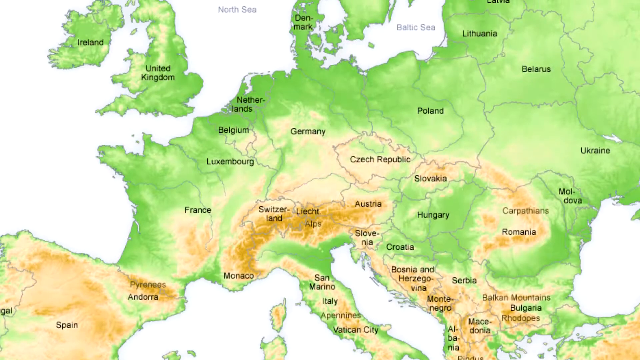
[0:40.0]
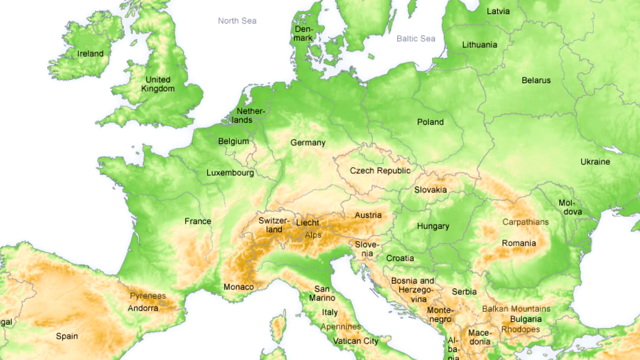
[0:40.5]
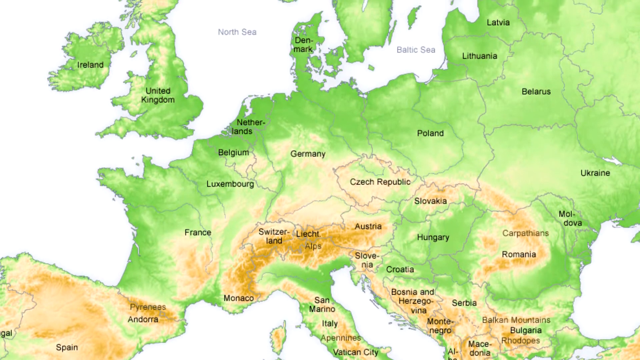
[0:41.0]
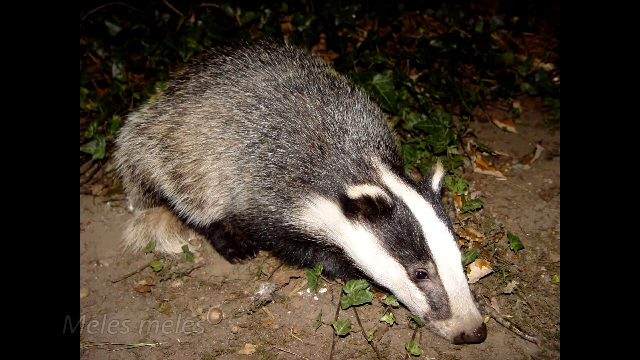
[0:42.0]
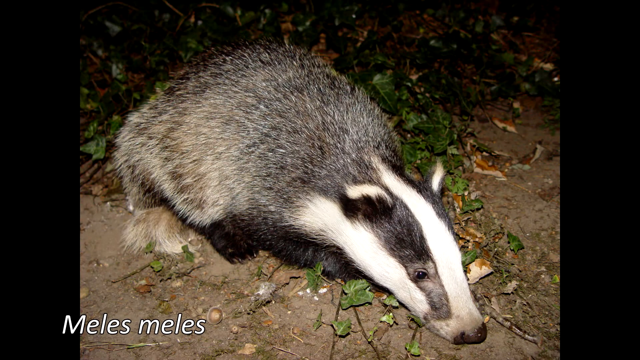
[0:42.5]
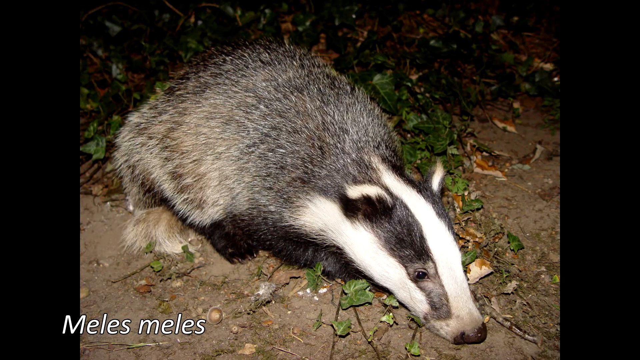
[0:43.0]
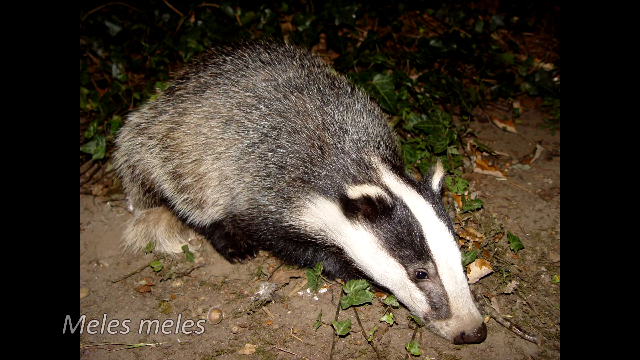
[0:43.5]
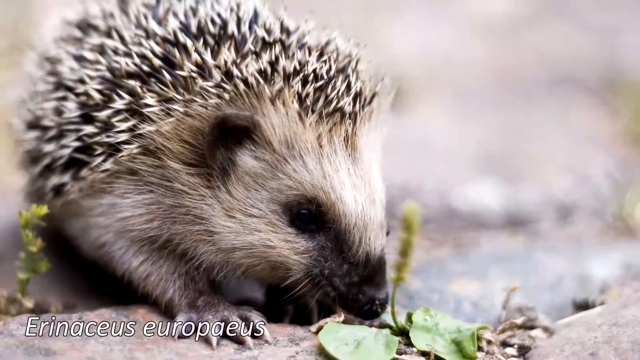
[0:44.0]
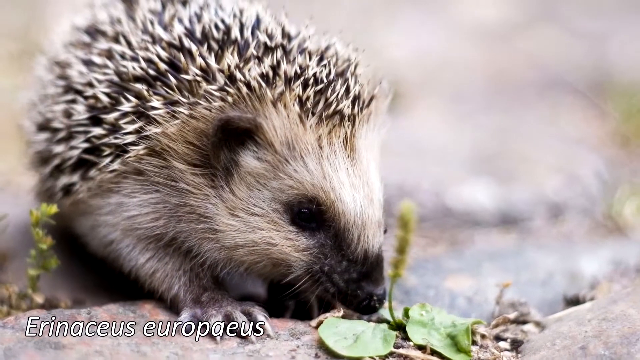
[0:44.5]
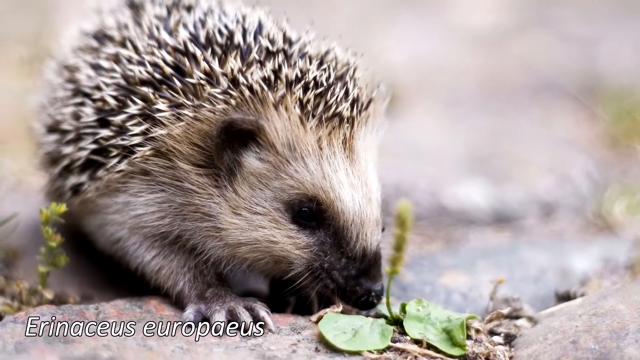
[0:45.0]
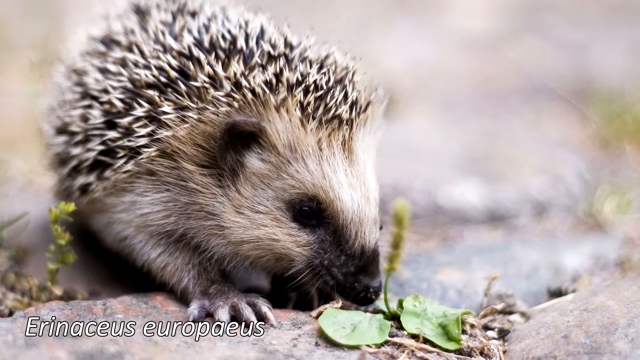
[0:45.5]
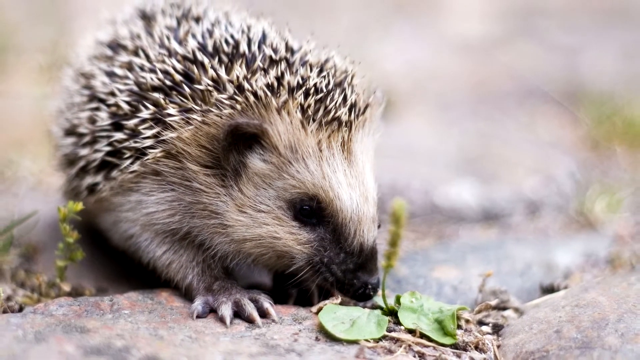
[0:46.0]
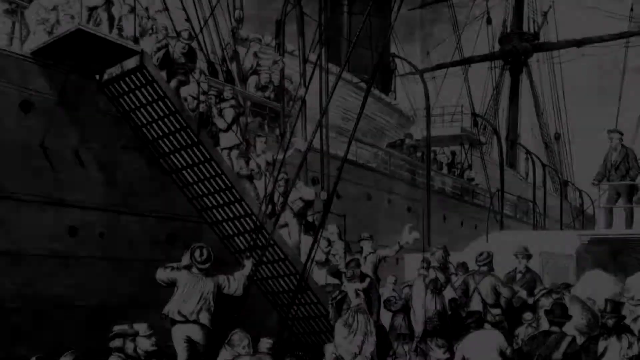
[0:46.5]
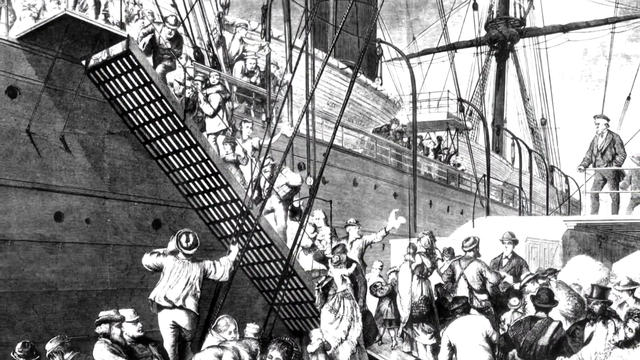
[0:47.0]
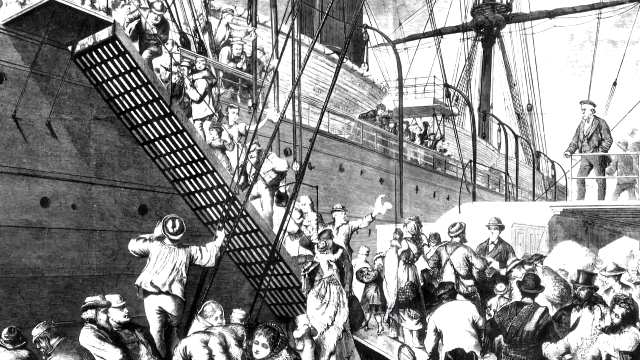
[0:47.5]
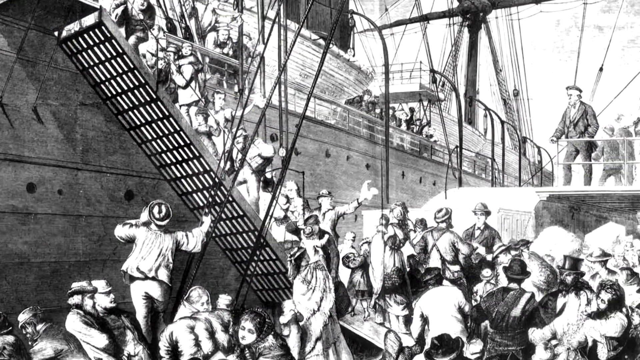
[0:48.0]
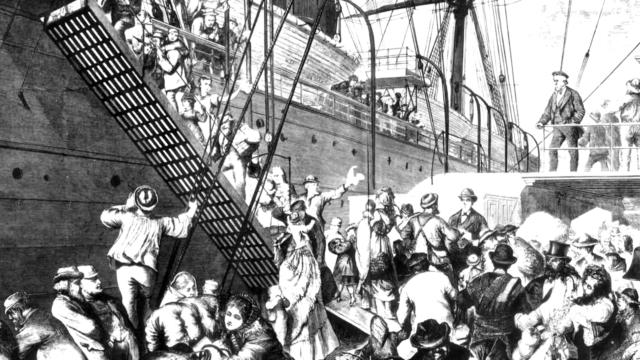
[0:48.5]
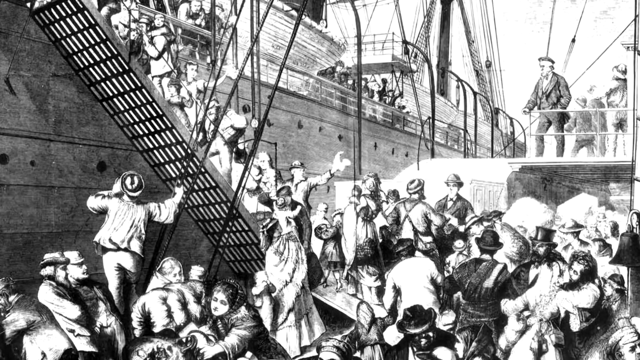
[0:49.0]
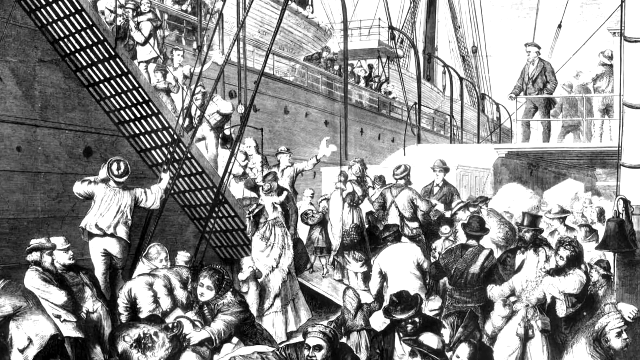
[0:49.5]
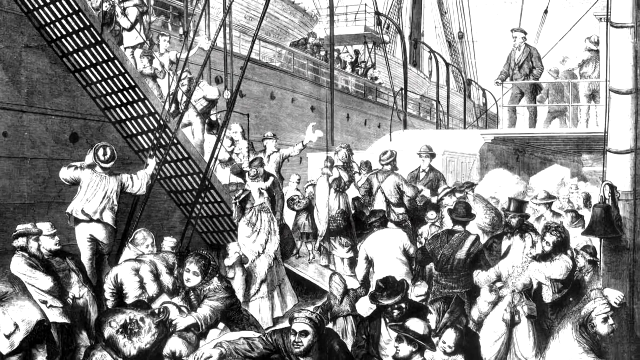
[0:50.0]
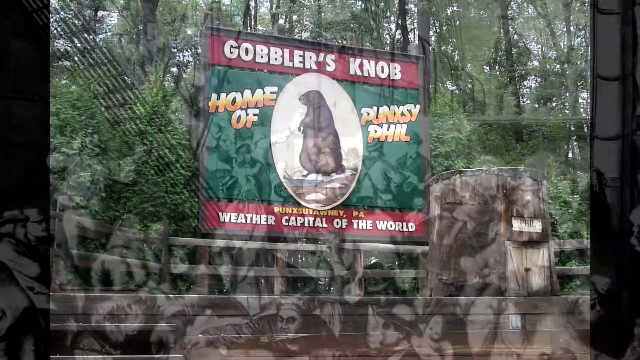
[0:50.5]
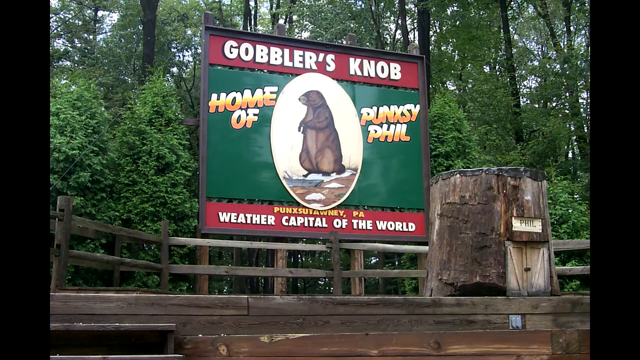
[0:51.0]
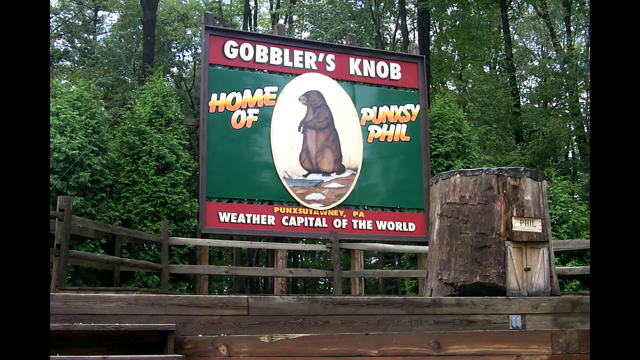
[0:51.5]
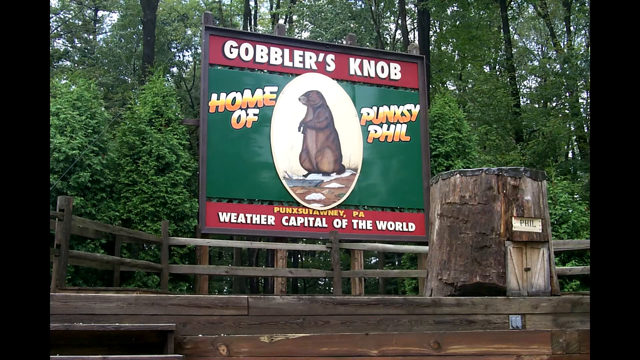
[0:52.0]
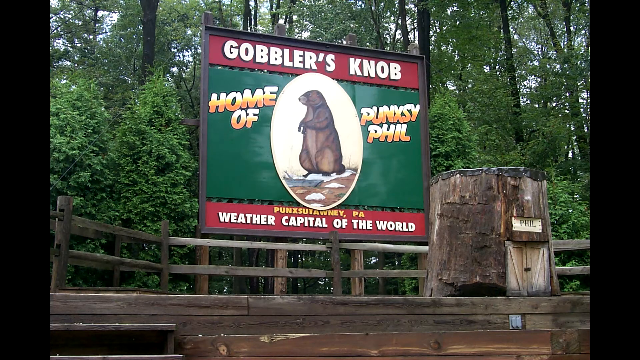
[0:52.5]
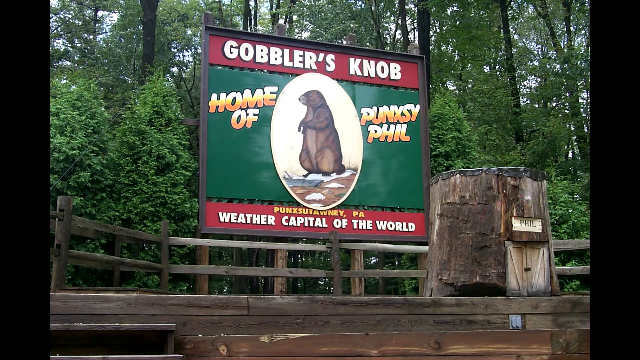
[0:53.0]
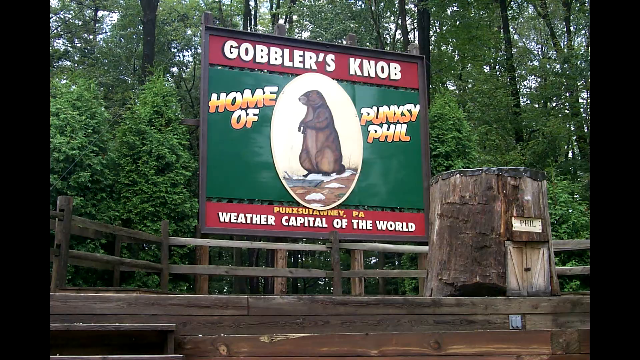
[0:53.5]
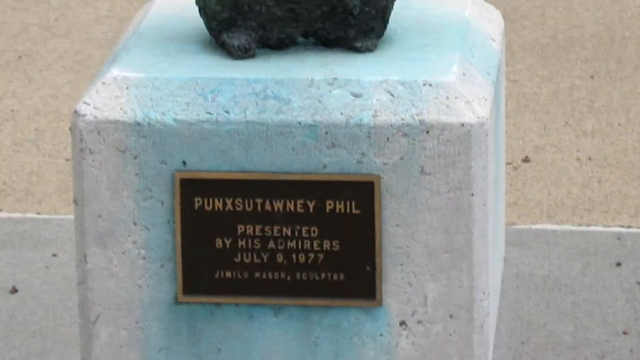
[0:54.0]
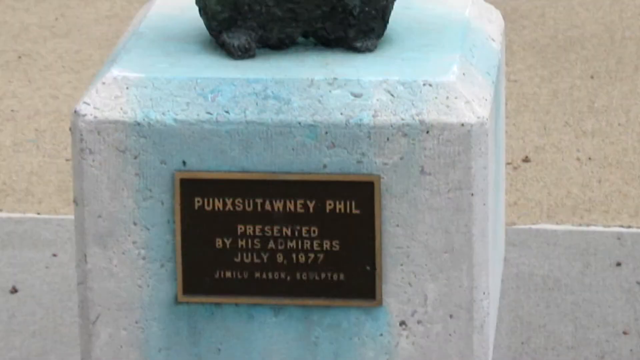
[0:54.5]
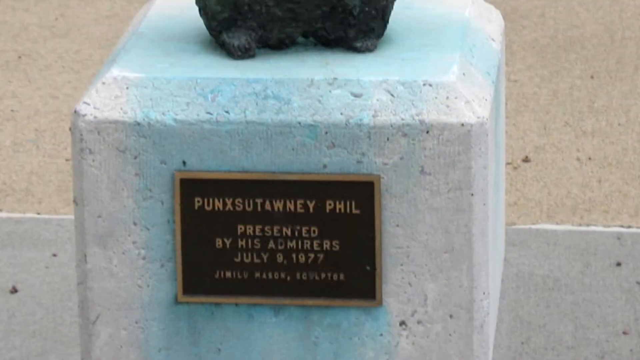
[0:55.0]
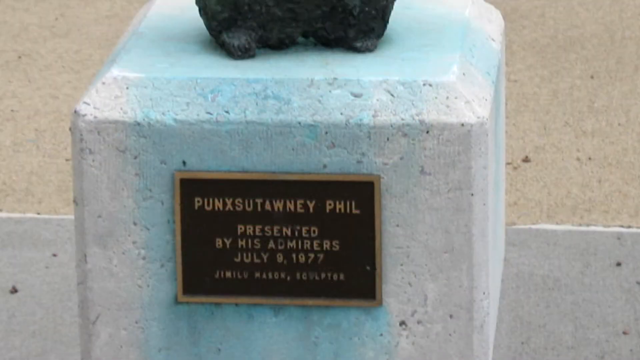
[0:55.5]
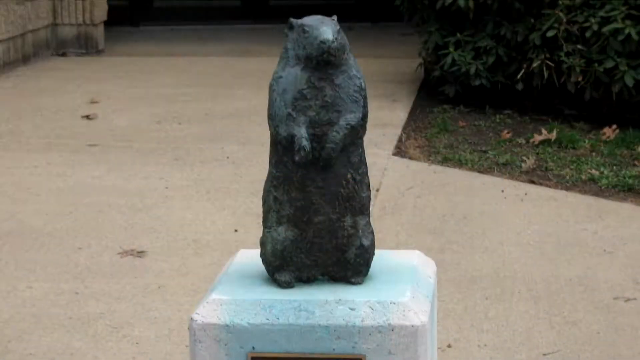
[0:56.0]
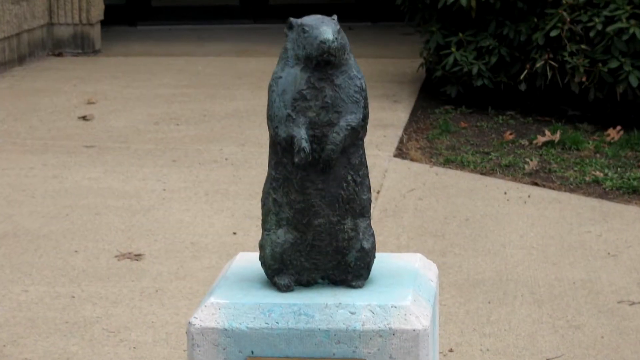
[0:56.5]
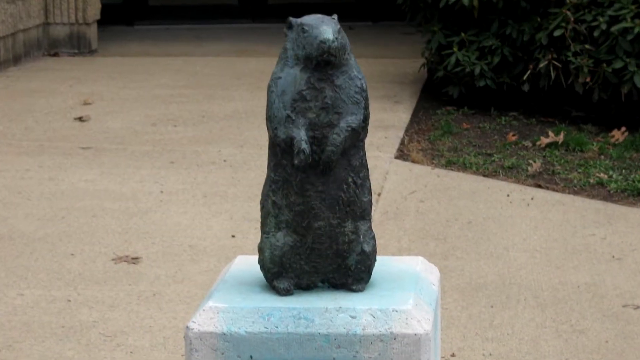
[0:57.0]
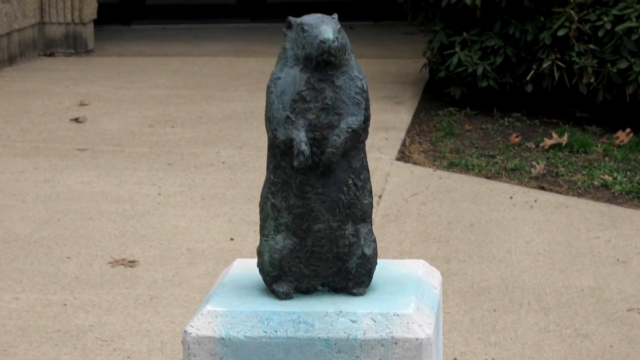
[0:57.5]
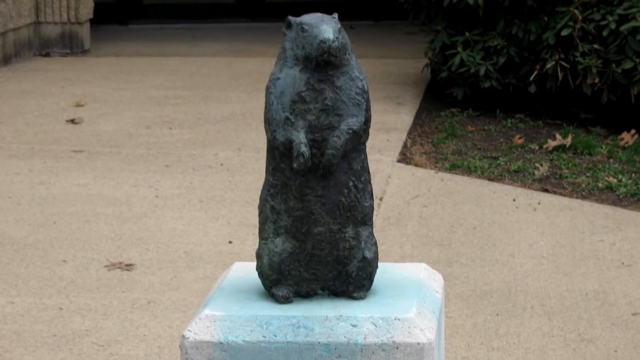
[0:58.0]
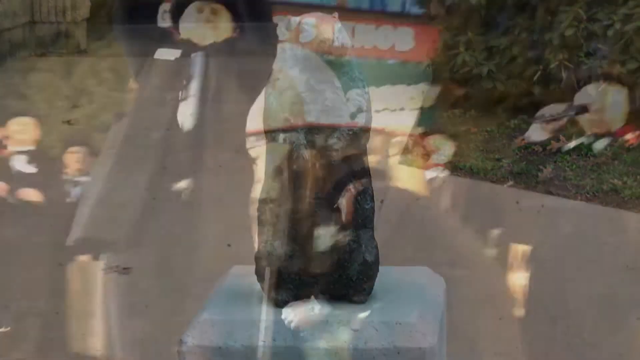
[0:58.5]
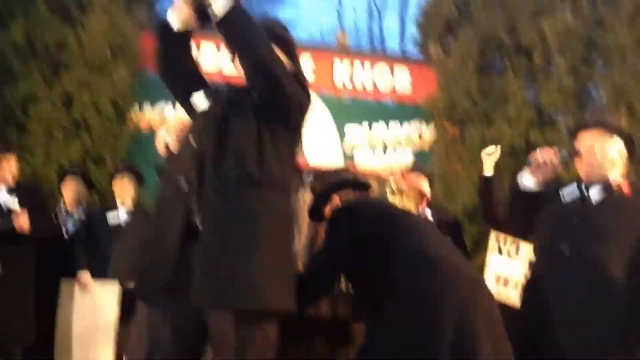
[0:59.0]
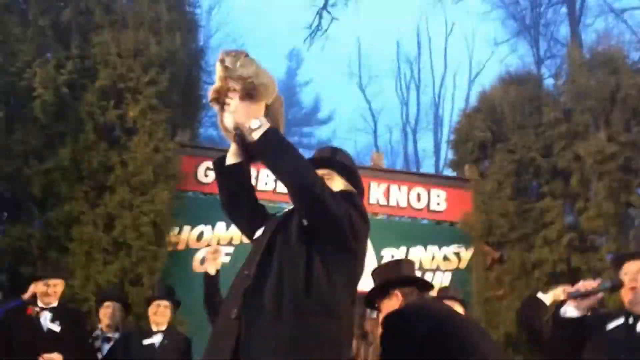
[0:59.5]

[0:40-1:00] A map of Europe shows a lot of green around the edges and some brown in the middle for the mountains, and the camera scrolls up. The view changes to a different animal, grayish with white stripes on its head, possibly a badger, on dirt ground. Next comes a hedgehog with its nose pointing toward the bottom center and its body toward the upper left; its spiky-looking fur is very white on top with mixed grays and browns. It is on a rock of some sort, against a very blurred background with small, blurred bits of greenery. The view pulls back slightly from the hedgehog and fades to black. The next scene is a hand-drawn grayscale image of an old steamer ship with people loading and unloading in a crowded scene. A man in the lower left is yelling and holding a rope as the gangway is down and people make their way up, while people on a platform at the middle right of the screen watch the process. The boat has what appear to be sails as well as a steamer chimney in the middle, and many small round windows along its side. The camera pans down and to the right to a crowd still on the docks waiting to board. Next is Phil's display in the middle of a forested area: a wooden home with a door, the word "Phil" to the right of a sign reading "Gobbler's Notch" on a red background, and below that a much larger dark green area reading "Home of", with a big logo at the upper left showing a groundhog facing left, almost in profile, and to its right "Puxatawney Phil" in letters fading from white to a darker orange at the bottom. Below that, another red banner reads "Puxatawney PA" in gold letters, and below that "Weather Capital of the World" in white; all of this text is uppercase. A wooden railing surrounds Phil's house, with a lot of shrubbery behind it. Then a white stone pillar appears, presented to Puxatawney Phil by his admirers on July 9, 1977, with a dark brown placard with gold letters and a black statue of Phil on top. The camera slowly moves in on the statue. The scene fades to video of the handler holding Phil high in the air over the crowds to show his result.